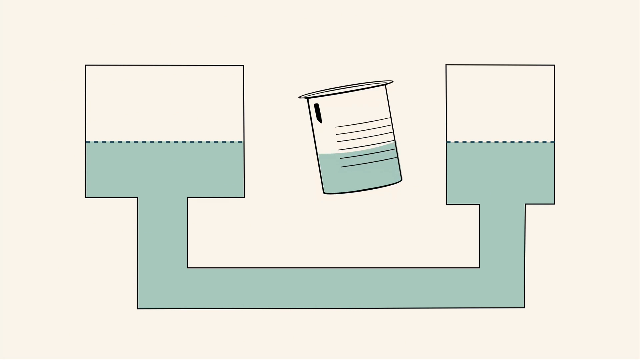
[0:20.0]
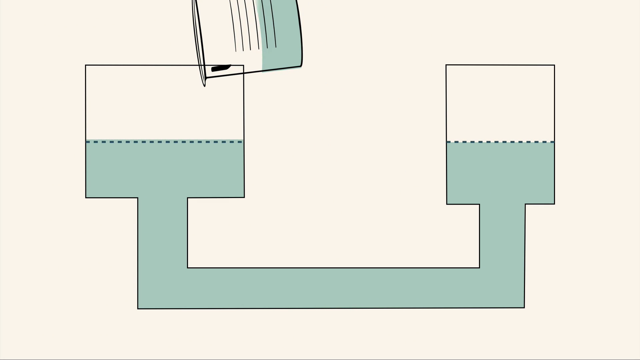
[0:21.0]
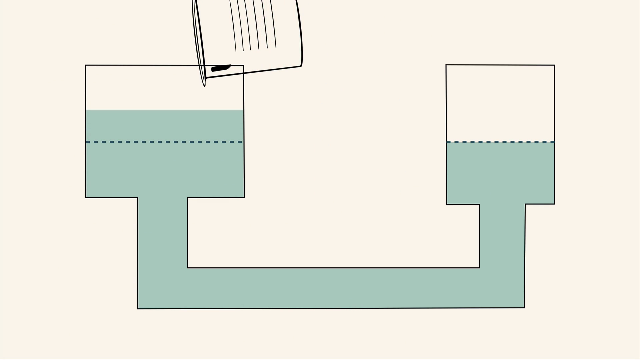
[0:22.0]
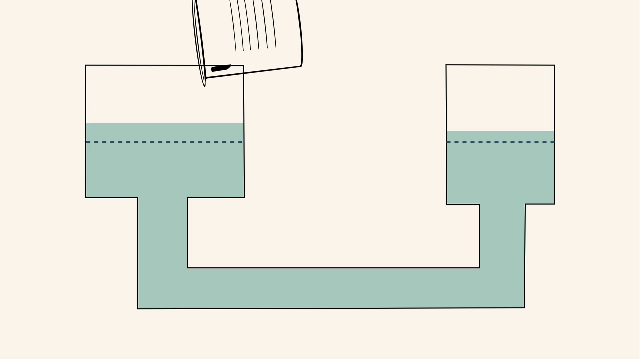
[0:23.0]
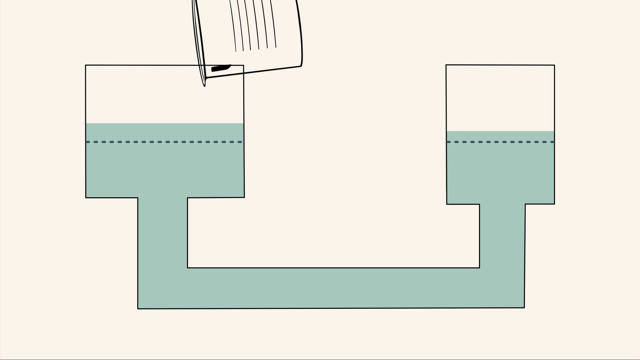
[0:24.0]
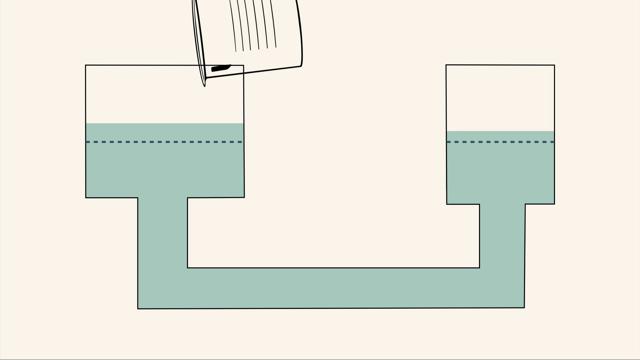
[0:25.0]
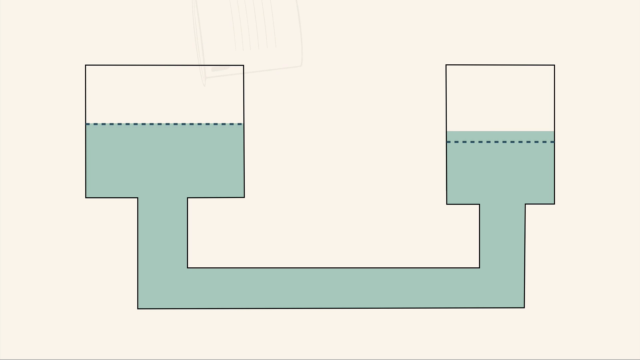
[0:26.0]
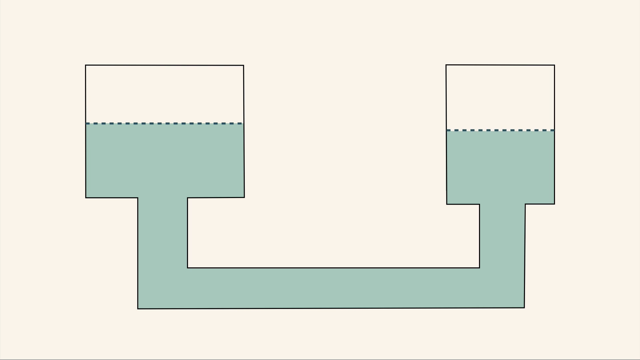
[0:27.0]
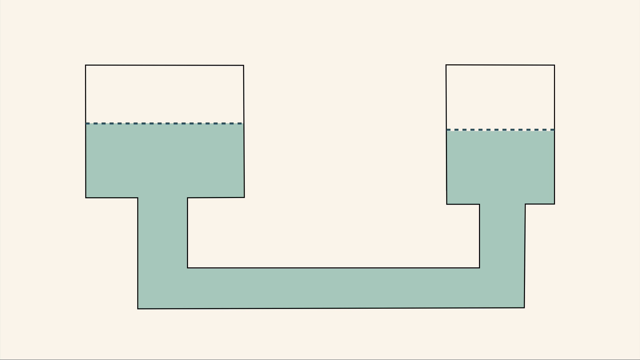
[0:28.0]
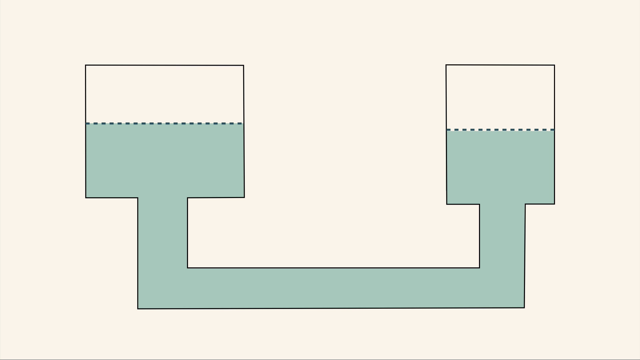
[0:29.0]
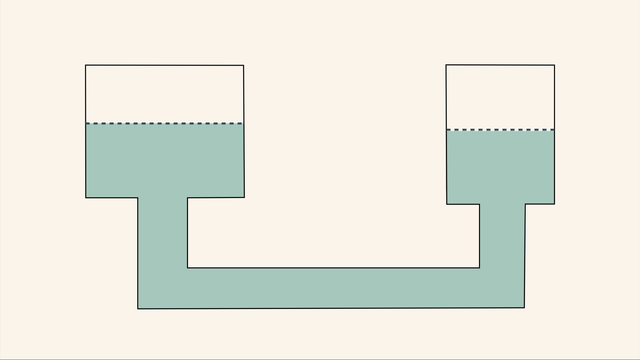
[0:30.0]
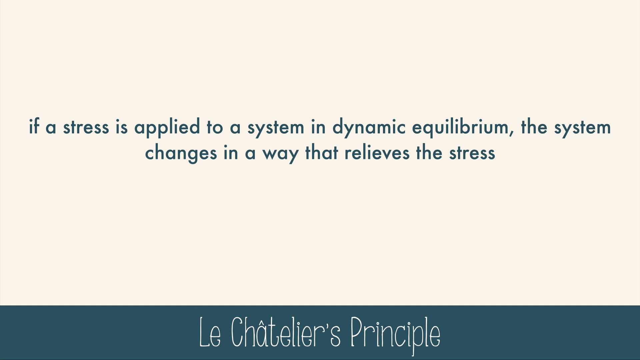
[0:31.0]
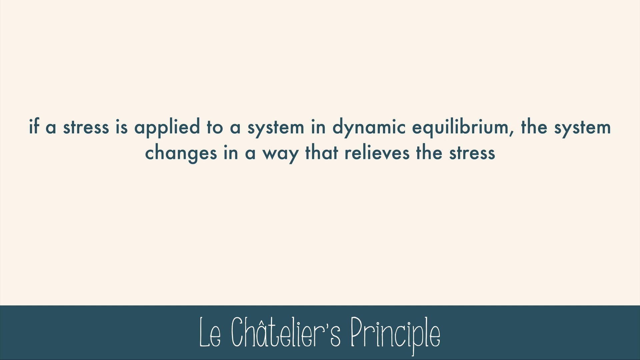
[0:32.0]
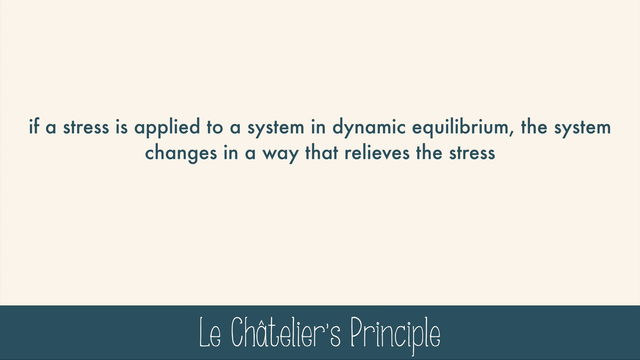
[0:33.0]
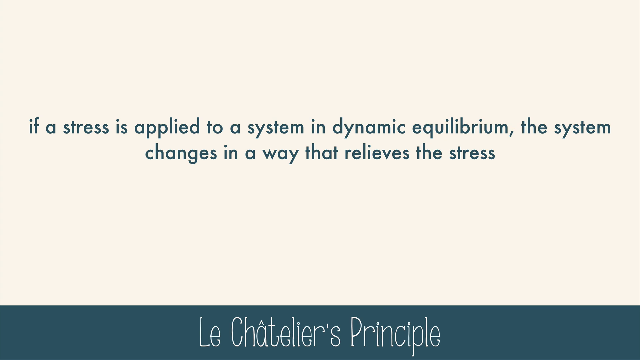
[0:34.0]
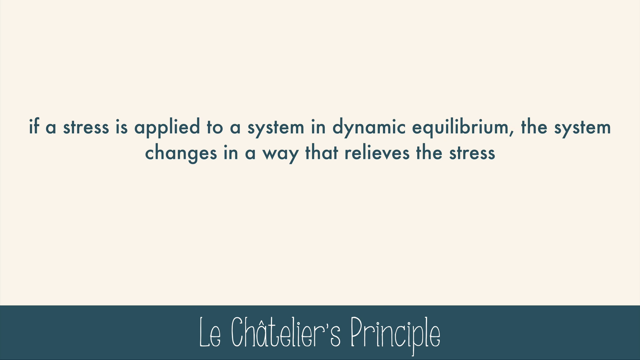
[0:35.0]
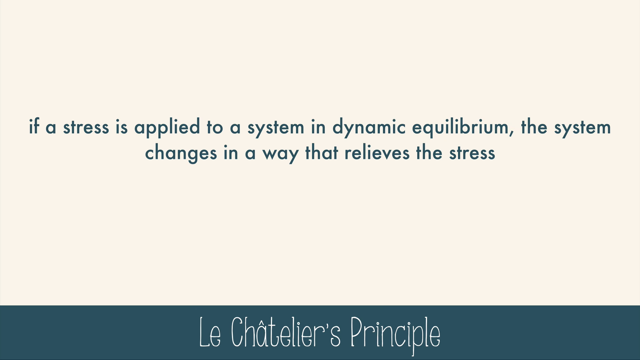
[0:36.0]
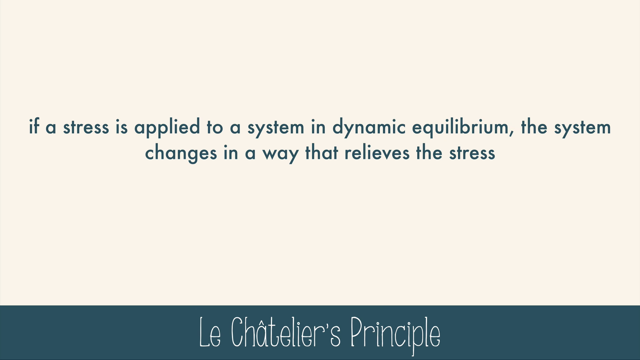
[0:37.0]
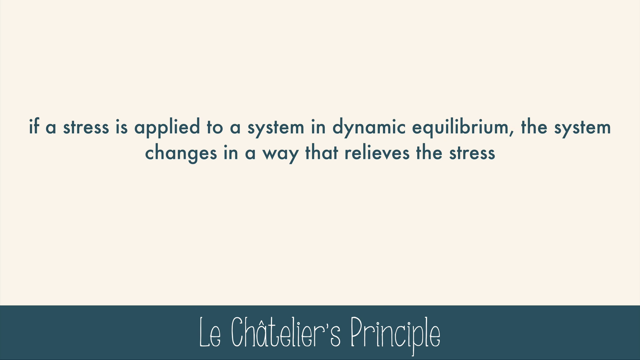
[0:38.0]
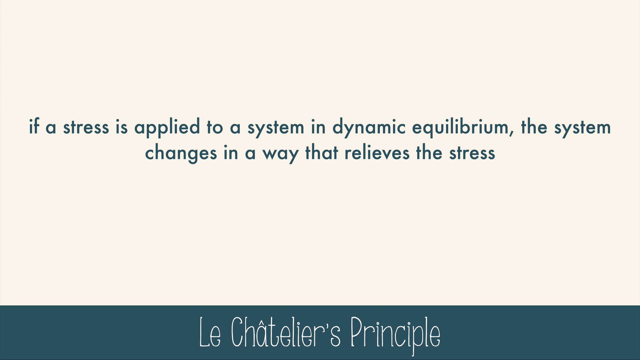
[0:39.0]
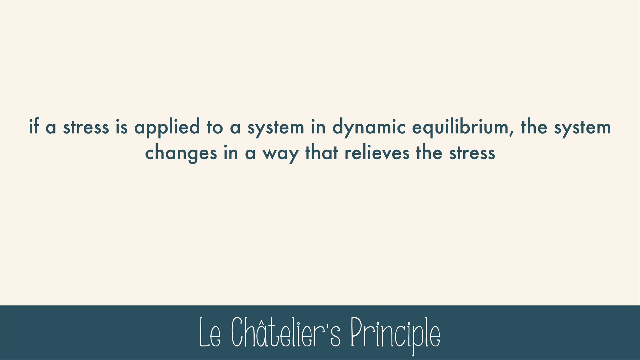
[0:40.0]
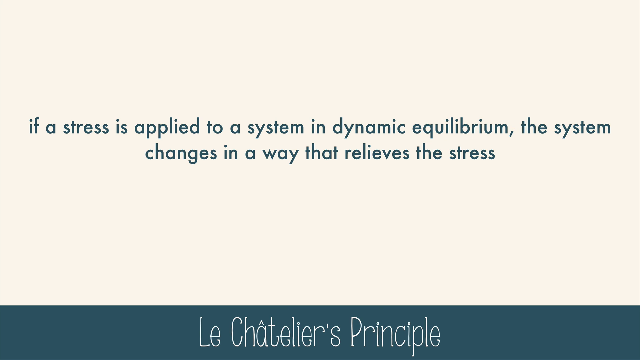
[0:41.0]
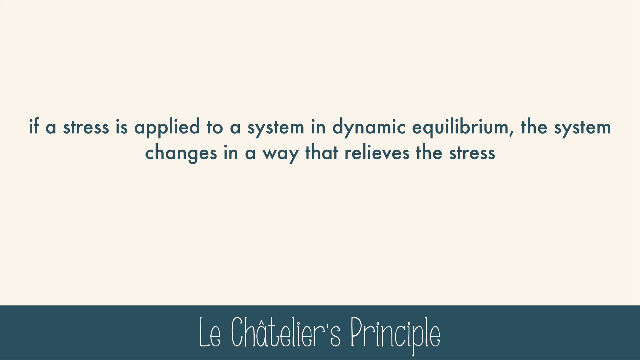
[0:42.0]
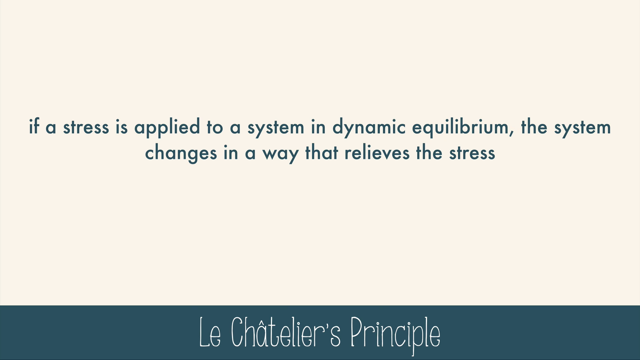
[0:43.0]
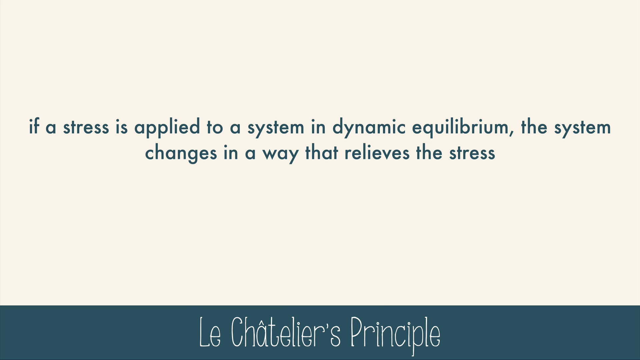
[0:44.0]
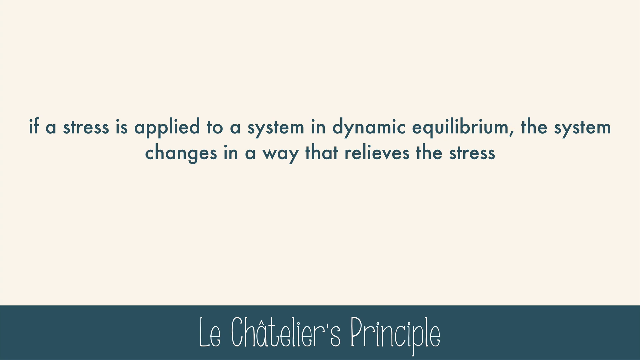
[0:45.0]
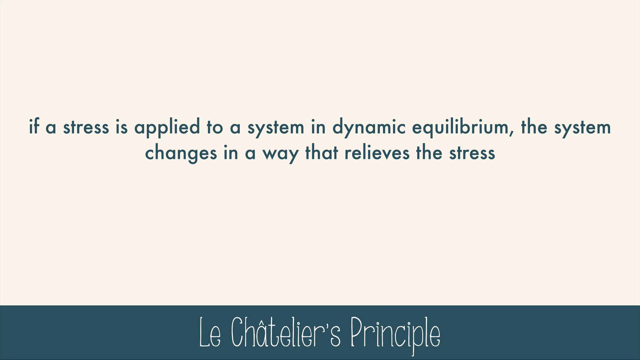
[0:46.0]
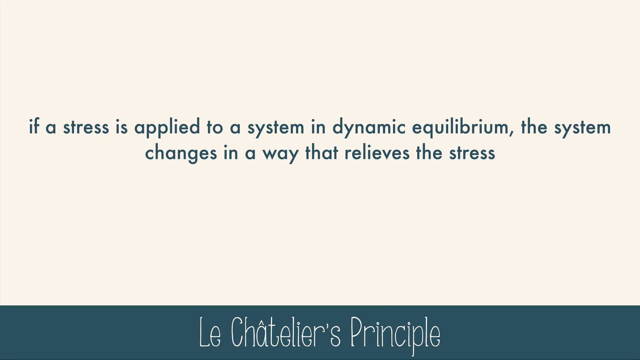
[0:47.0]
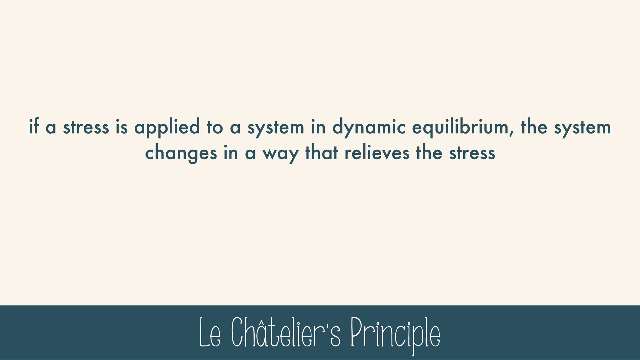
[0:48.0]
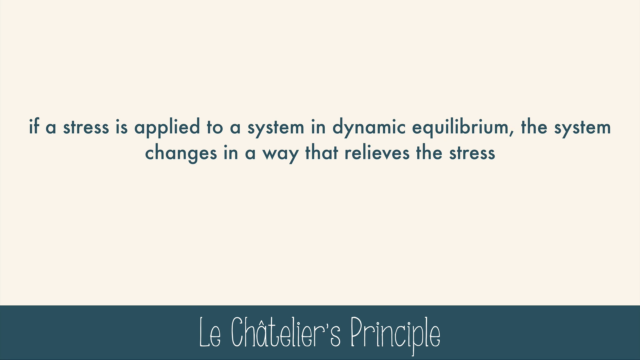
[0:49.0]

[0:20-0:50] Two rectangles connected to each other by a tube, with a flask with lines on it in the middle, all have water in them. The flask is lifted and poured into the rectangular structure. The rectangle on the left starts to fill up, then its water goes down as the water level in the rectangle on the right moves up. The dotted line that was there at the beginning moves up too, to match the new water levels of the rectangular structure. Text then appears on a tan background: "if a stress is applied to a system in dynamic equilibrium, the system changes in a way that relieves the stress." Under this, in a blue banner at the bottom, "Le Chatelier's Principle" is written in white.